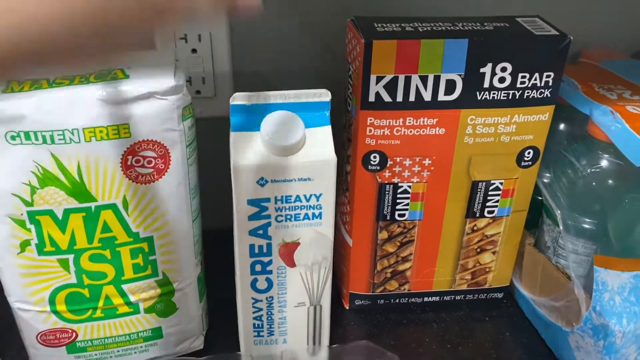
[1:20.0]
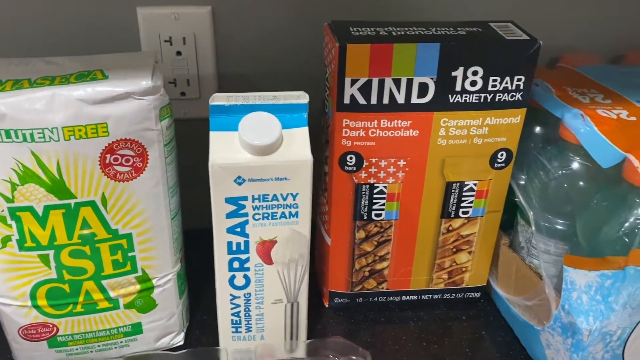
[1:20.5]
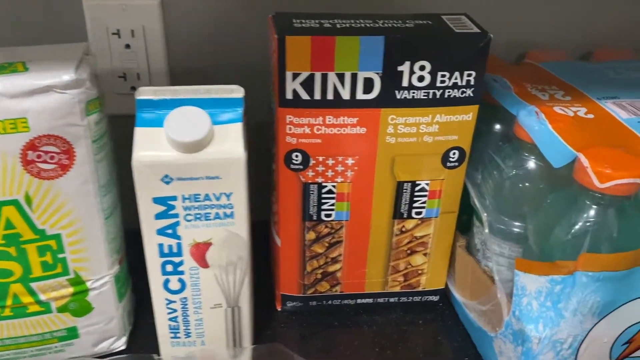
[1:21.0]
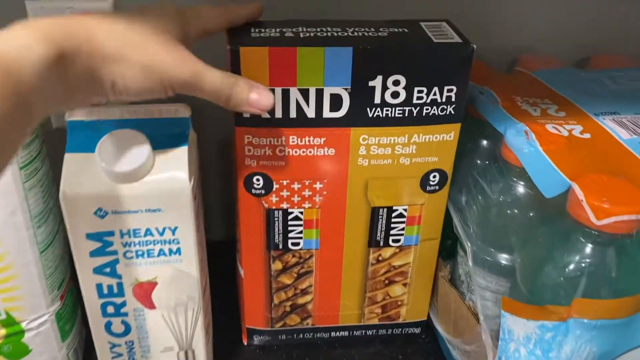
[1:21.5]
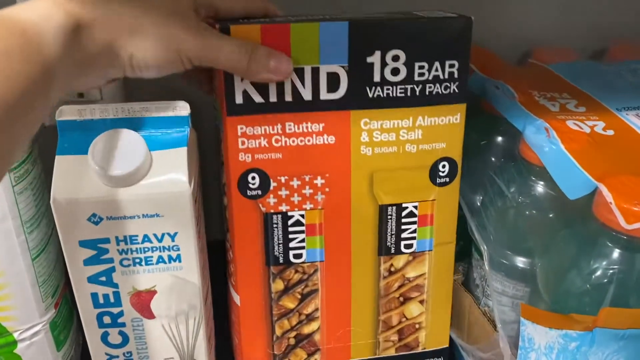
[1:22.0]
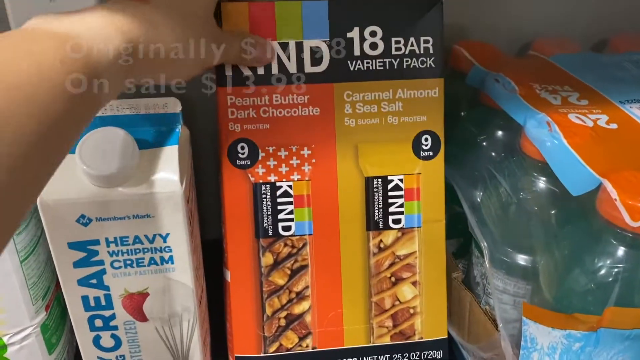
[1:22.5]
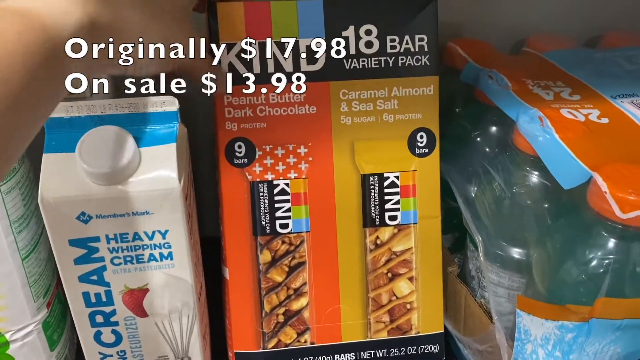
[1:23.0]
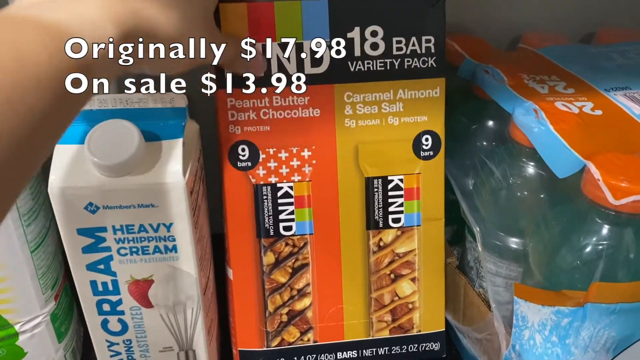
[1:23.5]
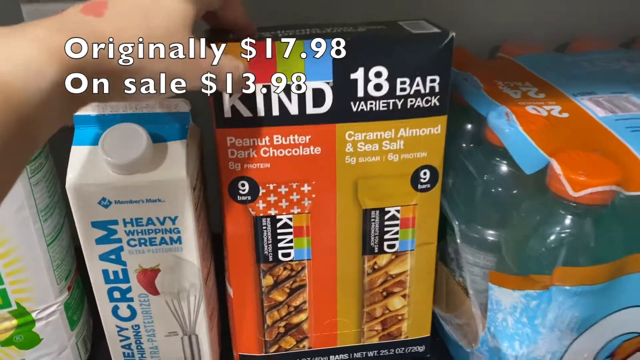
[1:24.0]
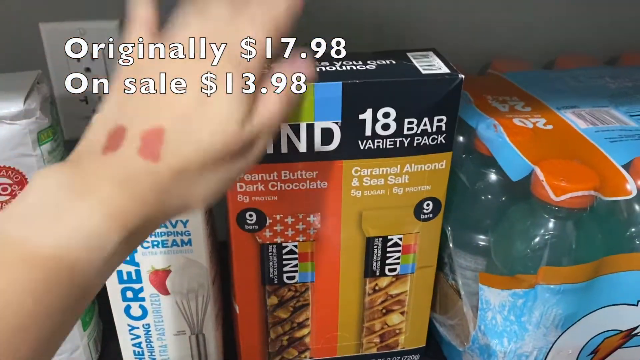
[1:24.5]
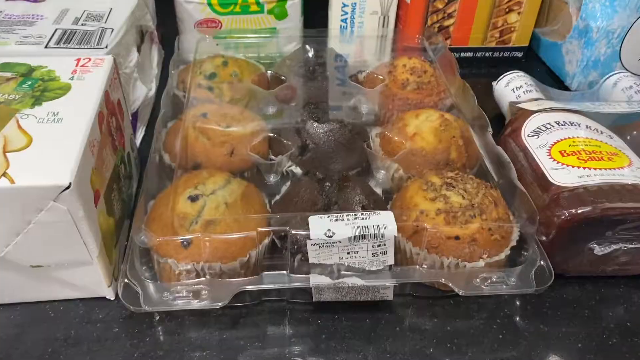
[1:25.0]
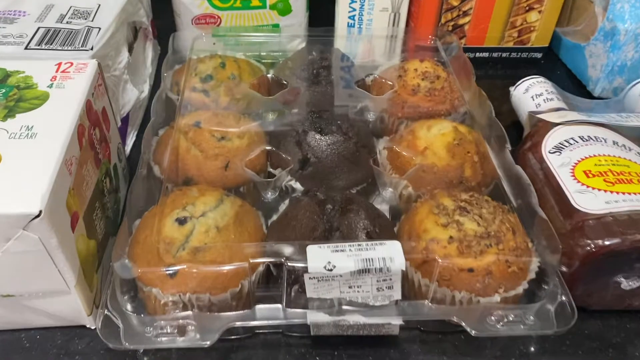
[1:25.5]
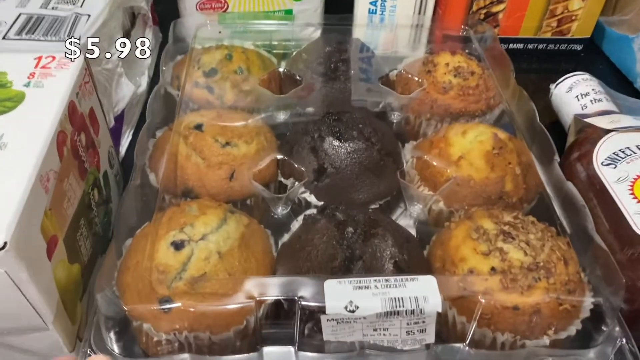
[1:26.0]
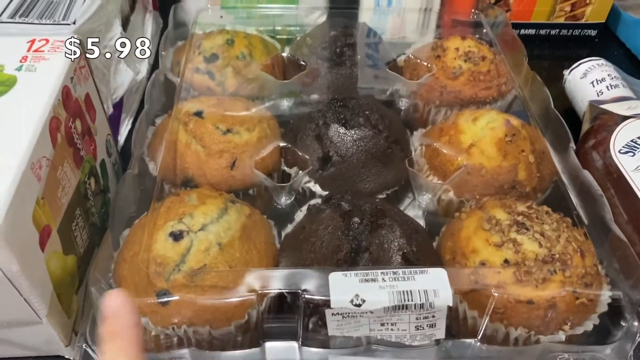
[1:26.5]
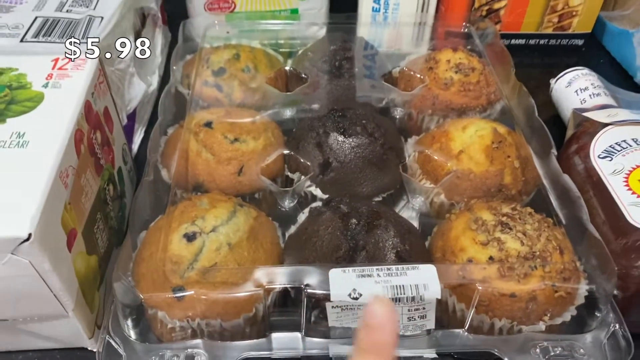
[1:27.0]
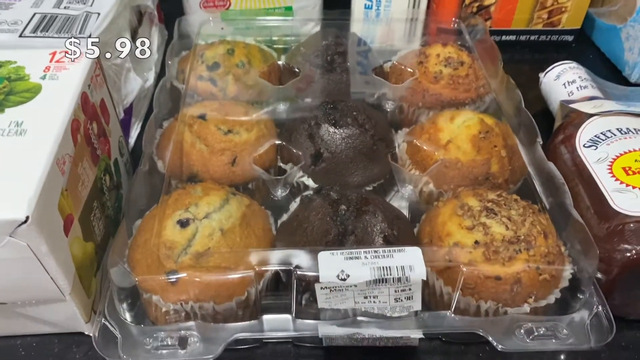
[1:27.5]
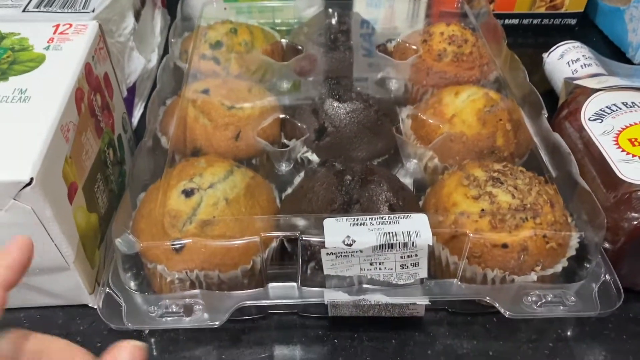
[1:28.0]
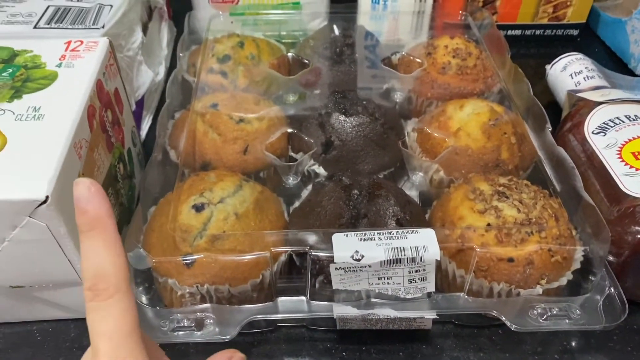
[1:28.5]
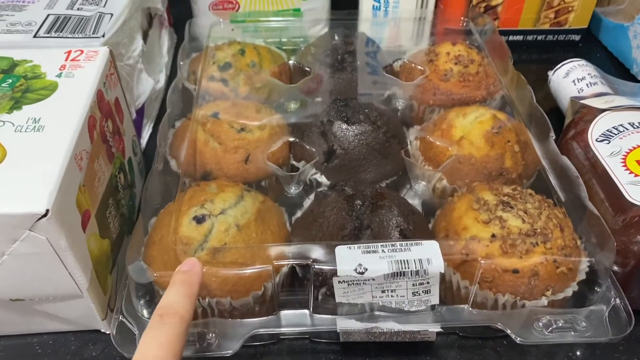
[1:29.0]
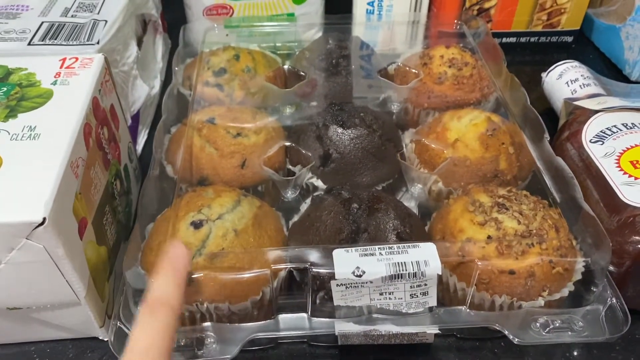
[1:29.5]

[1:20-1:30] The person's left hand has just been on a heavy cream container, which rocks a bit from left to right as the hand moves away. The camera pans to the right, and the left hand grabs a box of variety protein bars of the brand Kind. The person holds the box and tilts it back slightly so the front is seen more clearly. Text appears in the upper left corner just as the box is tilted back, showing an original price of $17.98 and a sale price of $13.98. The box is held in place, then tilted forward and returned to its original position.